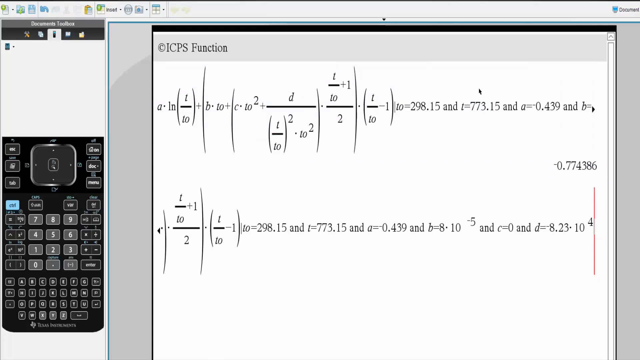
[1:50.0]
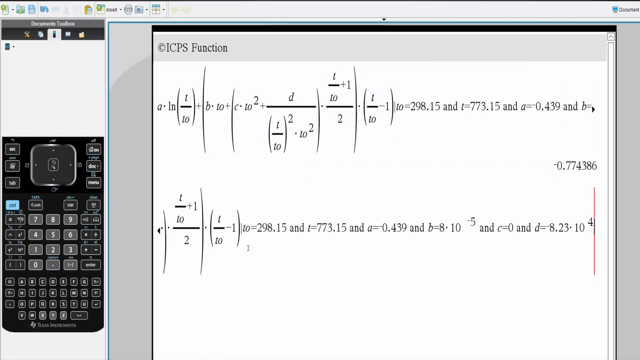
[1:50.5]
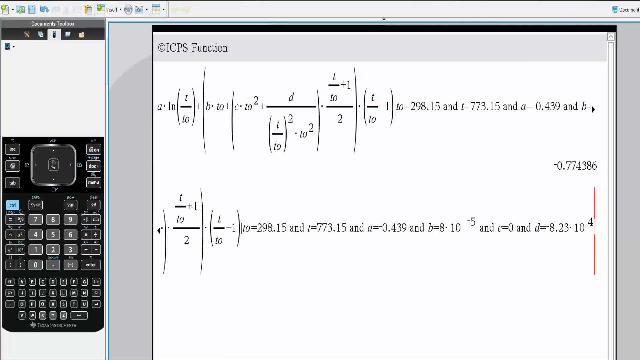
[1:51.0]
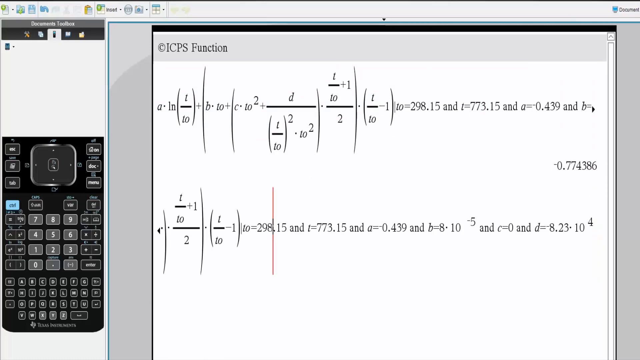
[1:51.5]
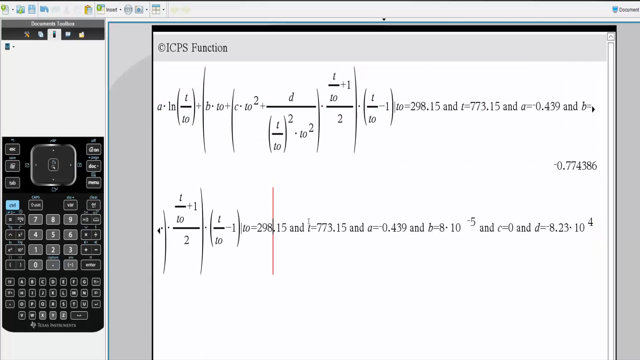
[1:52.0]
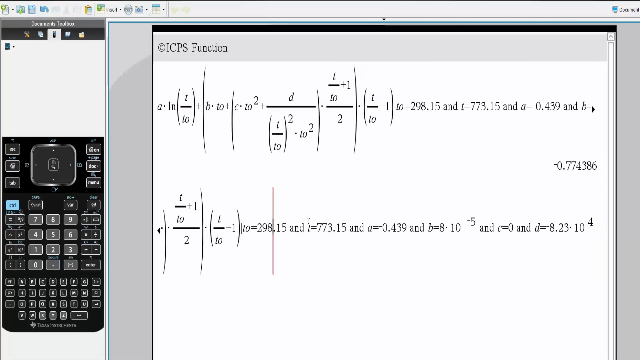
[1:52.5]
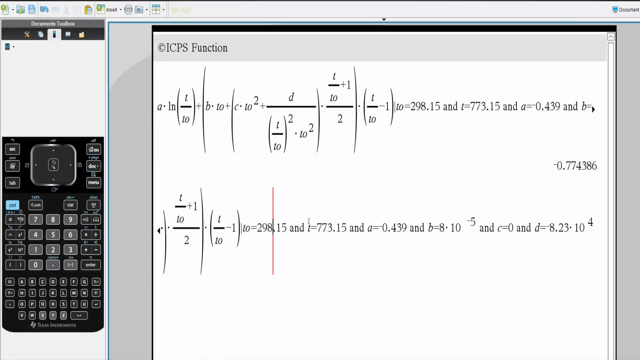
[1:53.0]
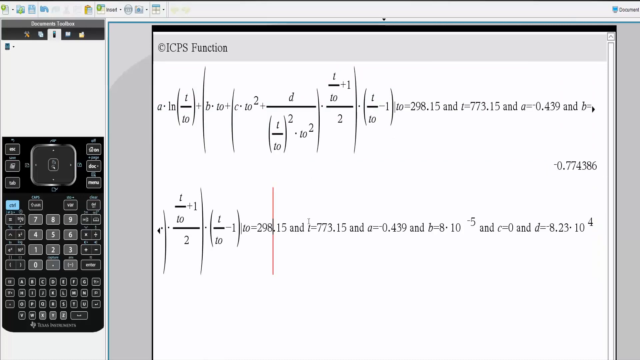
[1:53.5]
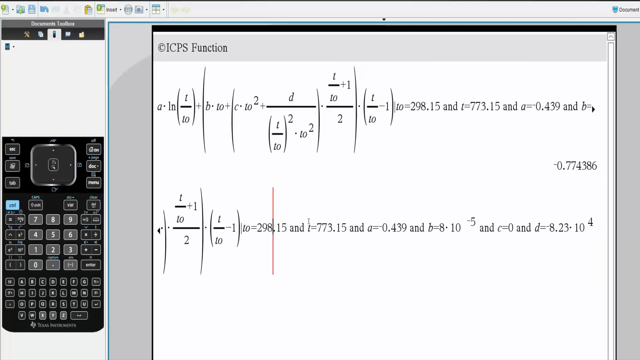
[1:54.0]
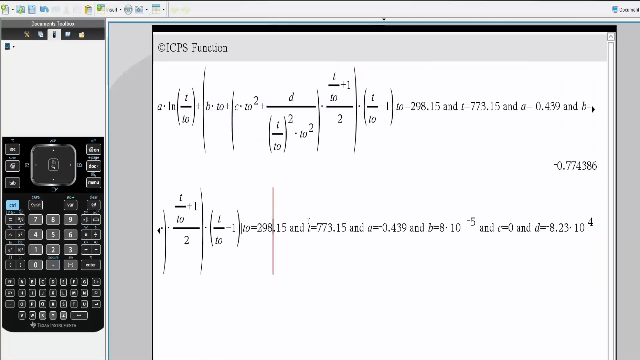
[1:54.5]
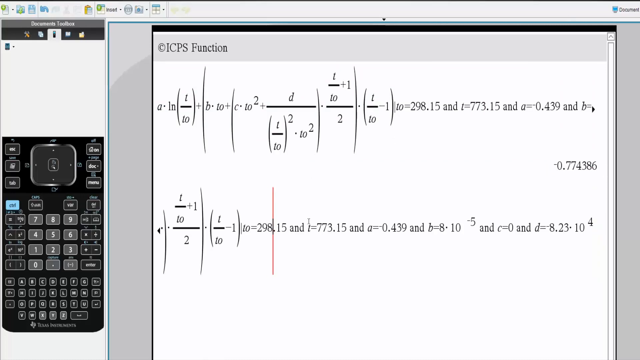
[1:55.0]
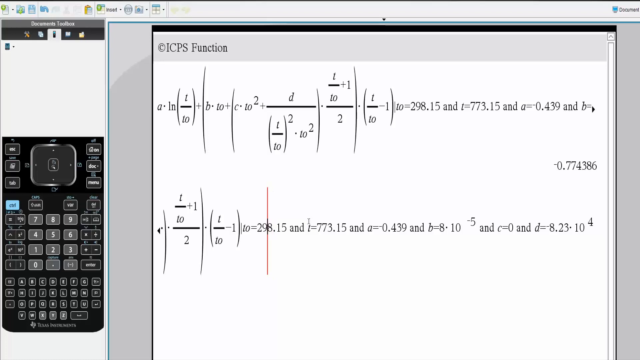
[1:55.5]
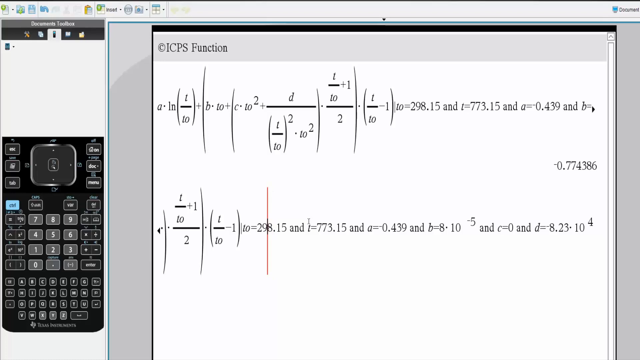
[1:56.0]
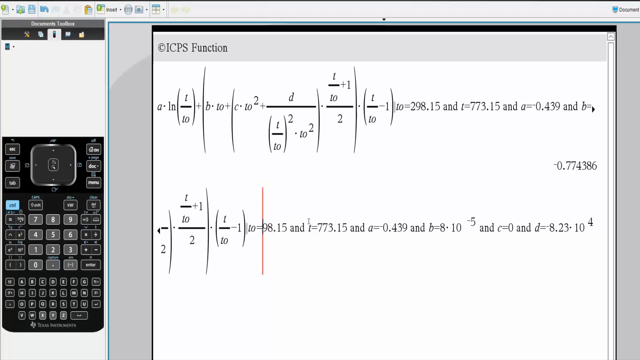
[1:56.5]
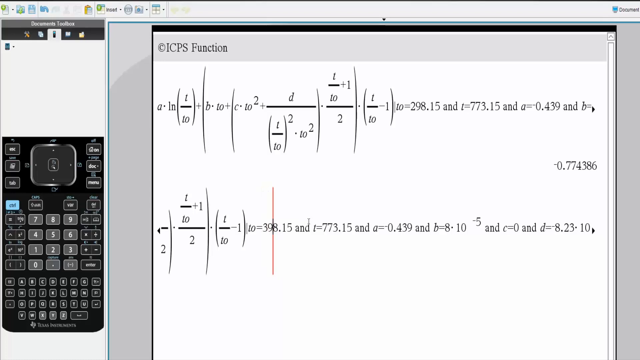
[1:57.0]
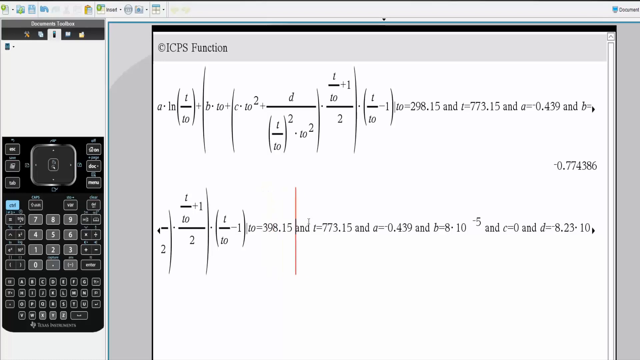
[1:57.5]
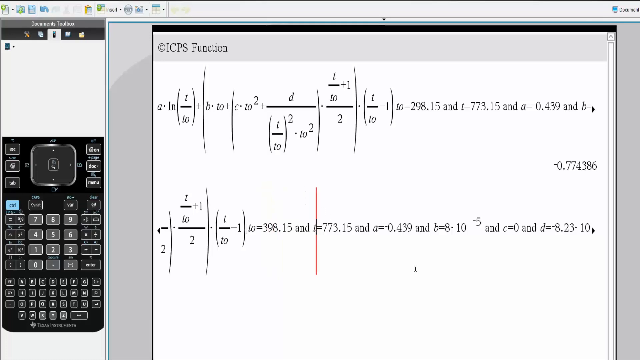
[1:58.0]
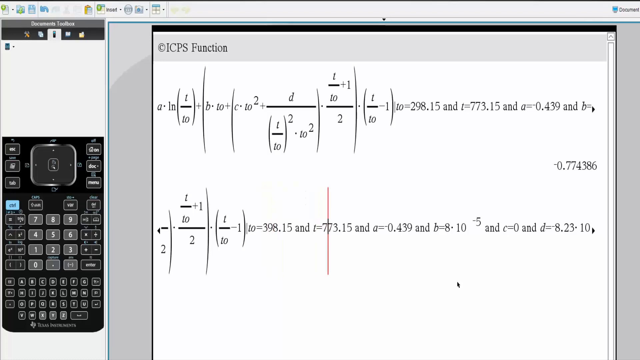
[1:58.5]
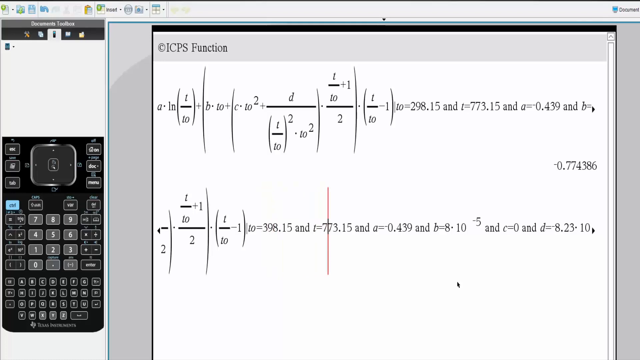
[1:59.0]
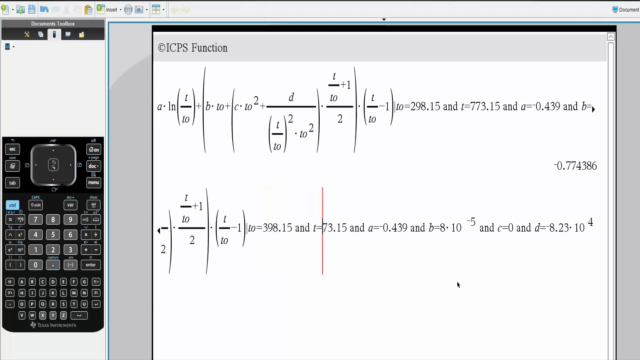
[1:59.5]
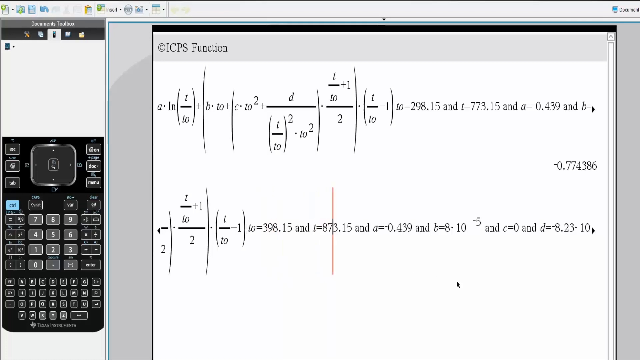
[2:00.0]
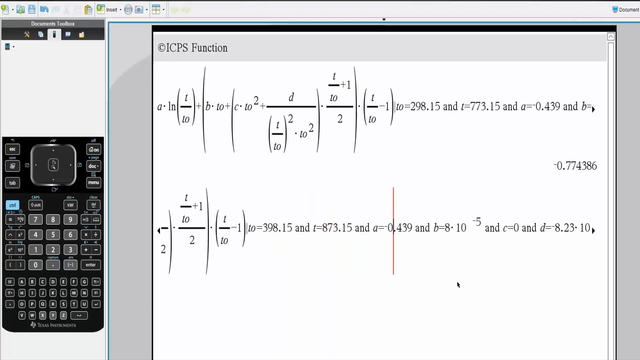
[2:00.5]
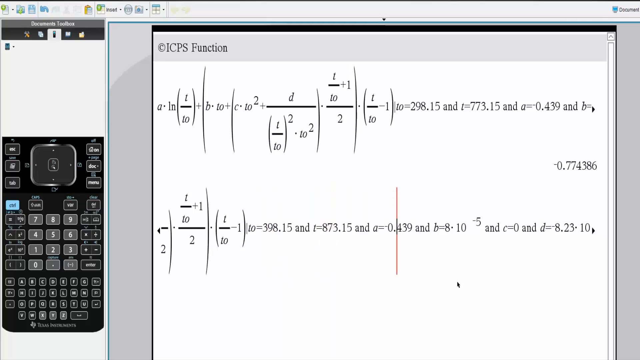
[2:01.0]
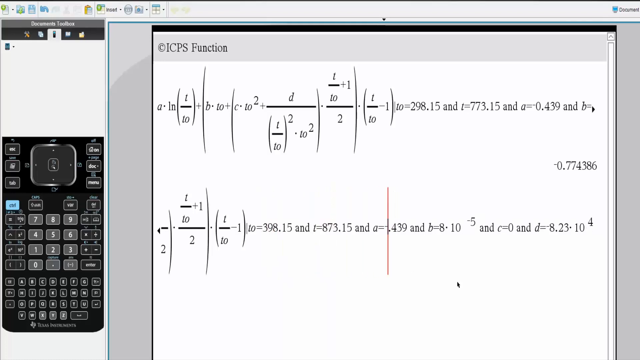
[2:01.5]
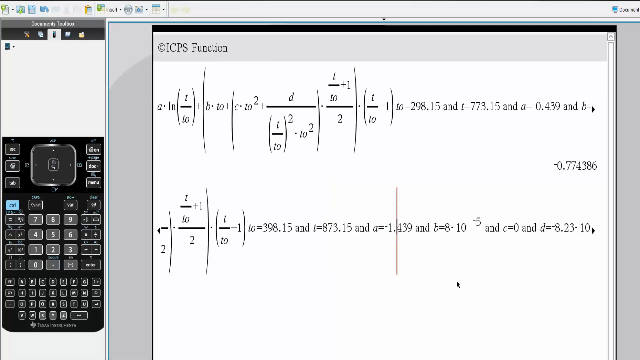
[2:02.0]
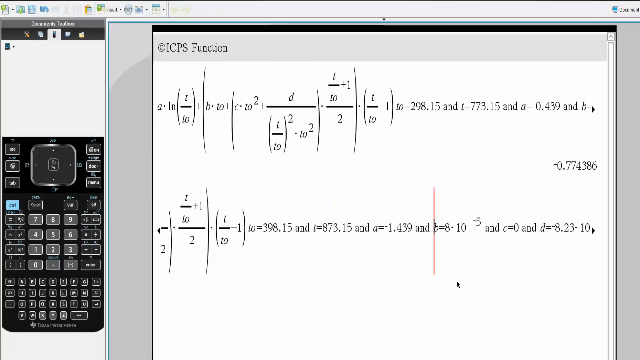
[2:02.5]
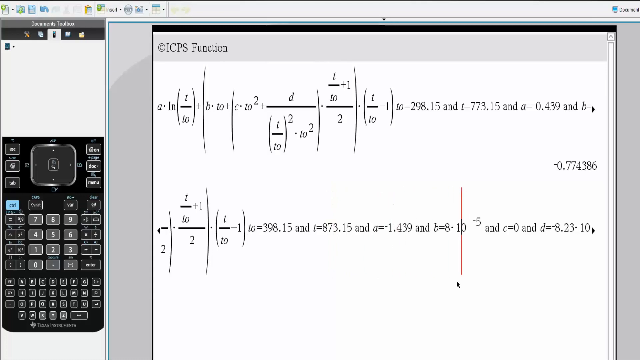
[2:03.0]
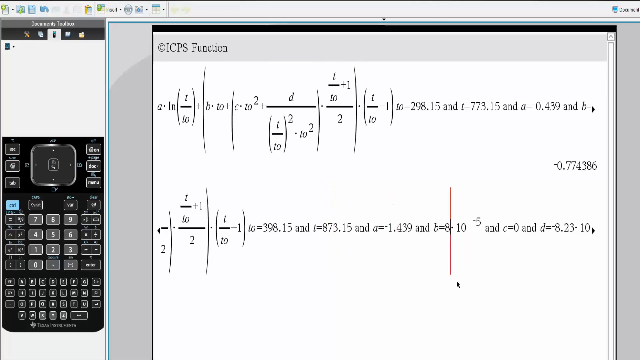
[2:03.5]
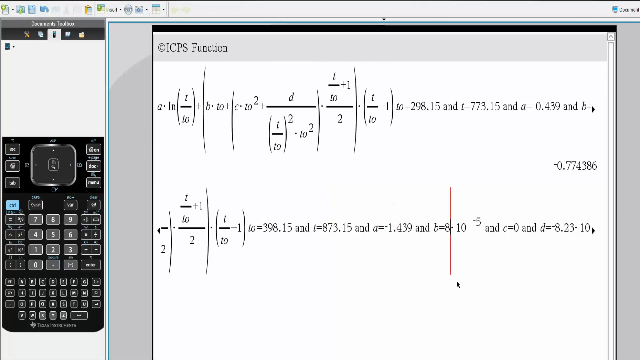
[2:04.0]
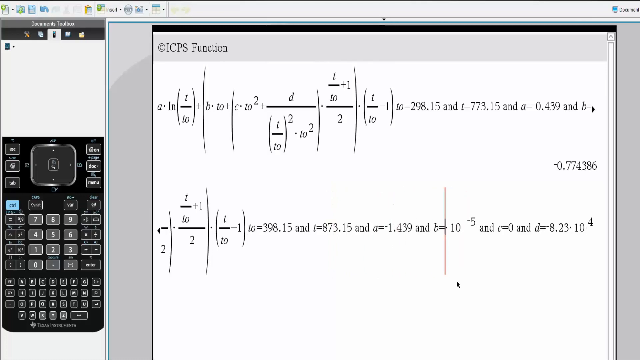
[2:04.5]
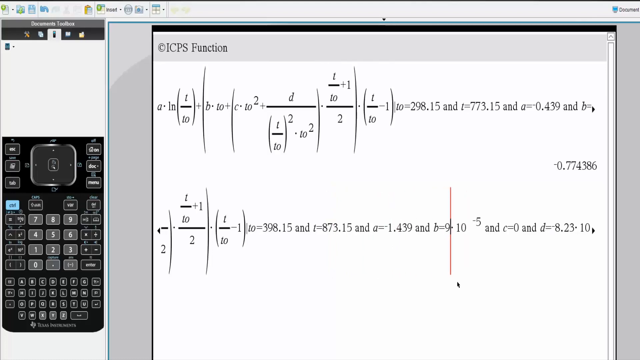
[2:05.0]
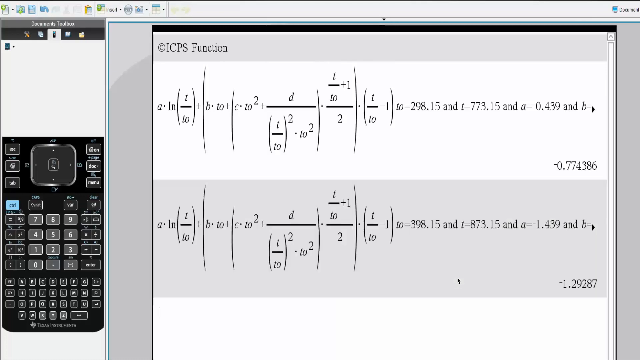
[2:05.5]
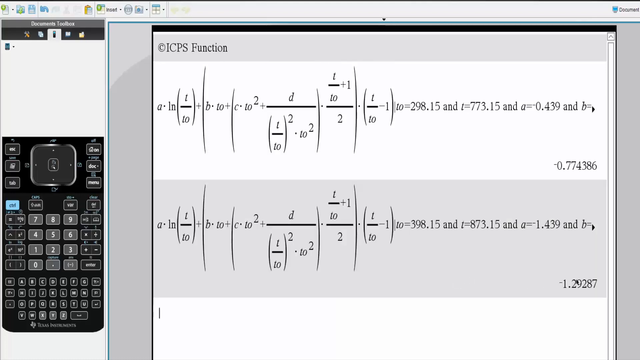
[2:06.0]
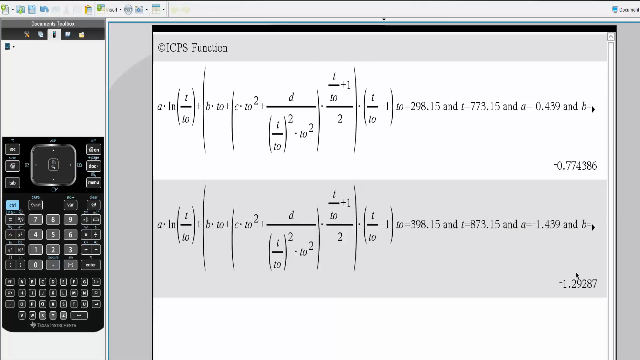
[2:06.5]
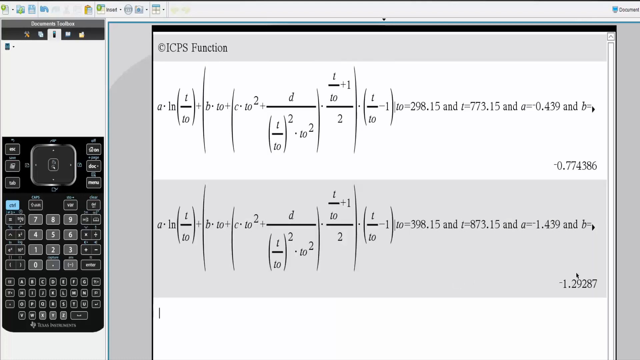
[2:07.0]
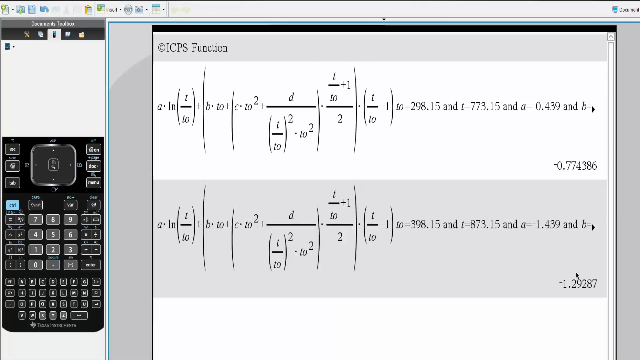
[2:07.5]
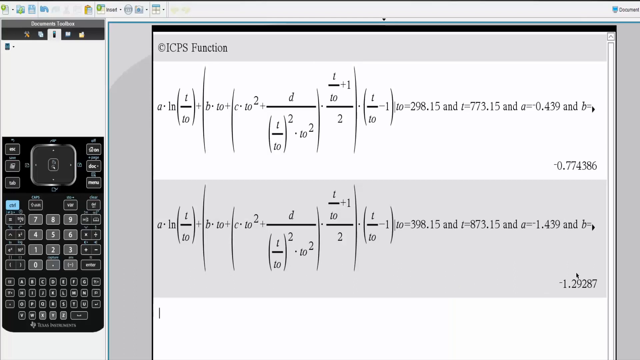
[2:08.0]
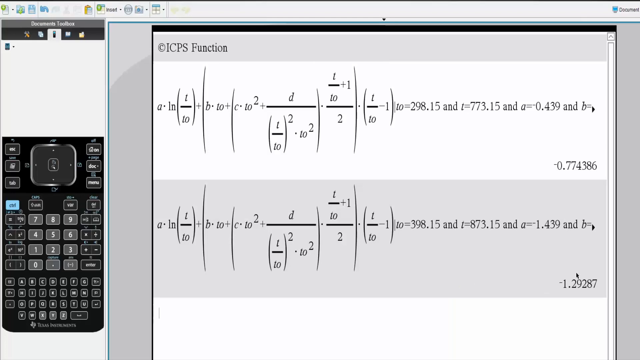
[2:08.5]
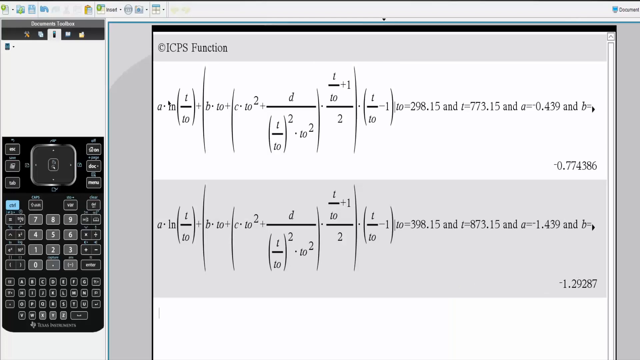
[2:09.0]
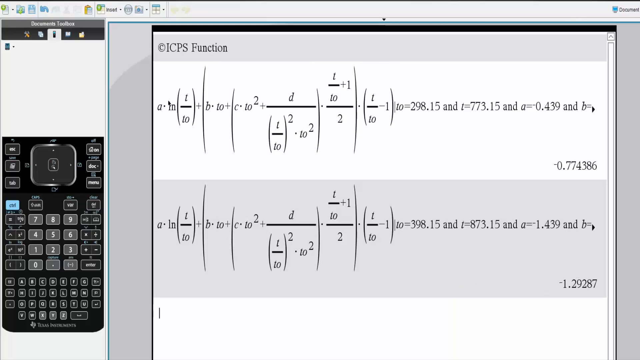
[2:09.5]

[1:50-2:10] The graphic calculator is on the left-hand side and the notepad-looking application on the right-hand side, showing sections of the function along with all of the variables and their values. The cursor moves around as if explaining what everything means, highlighting pieces of the massive formula and then moving to the right-hand side to the variables and their values. It appears to be a professor giving a short lecture about the formula, its variables, possibly how to solve it, and how to use the calculator on the left to do so.